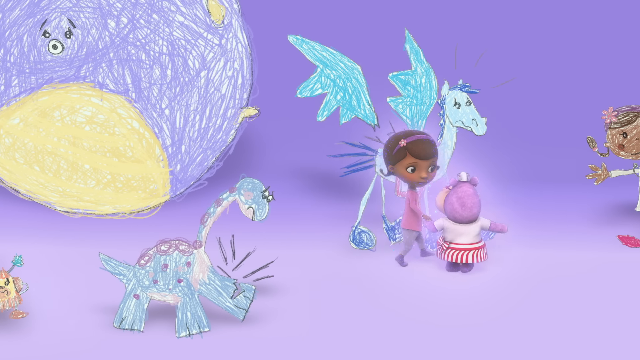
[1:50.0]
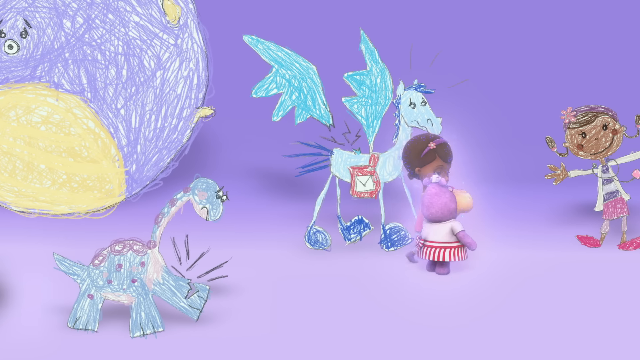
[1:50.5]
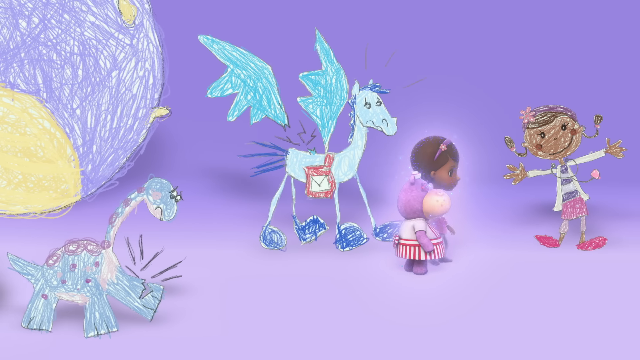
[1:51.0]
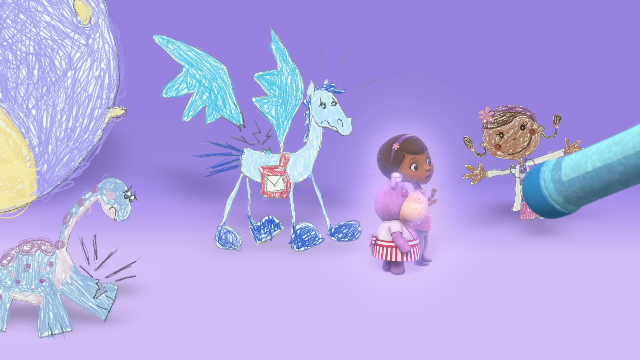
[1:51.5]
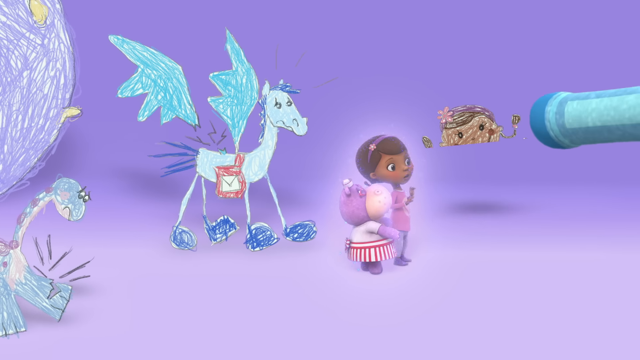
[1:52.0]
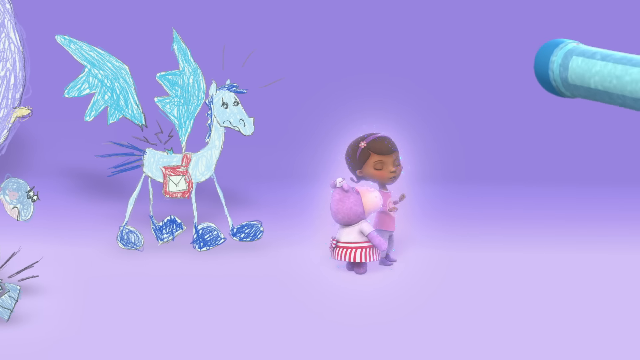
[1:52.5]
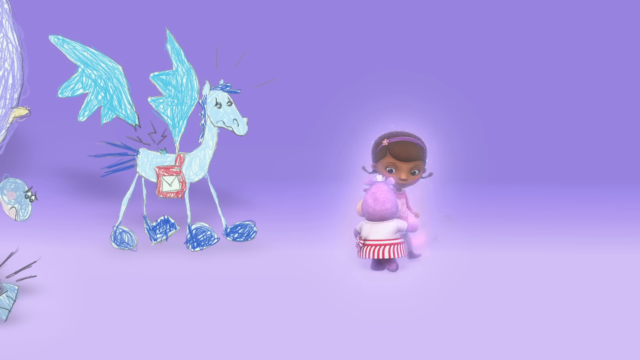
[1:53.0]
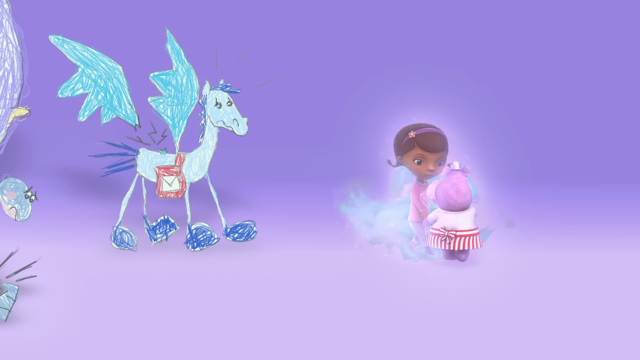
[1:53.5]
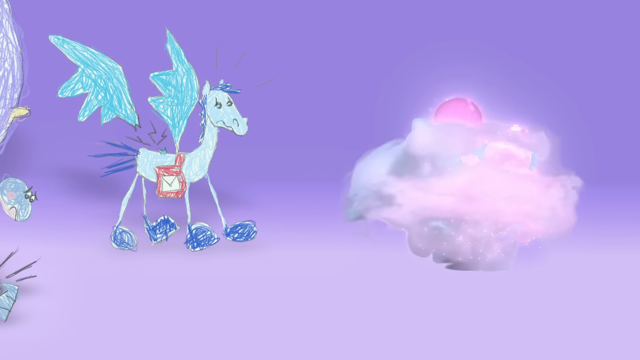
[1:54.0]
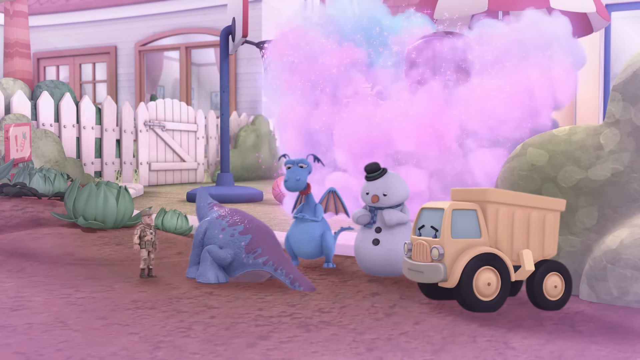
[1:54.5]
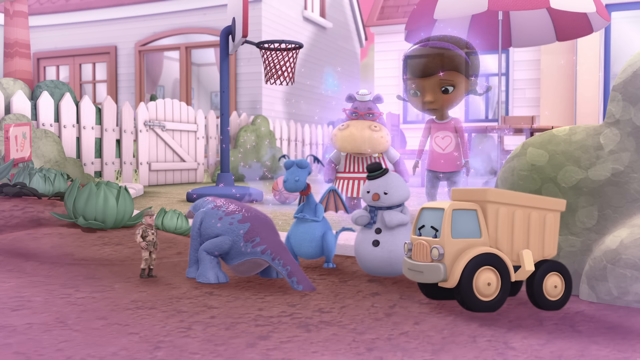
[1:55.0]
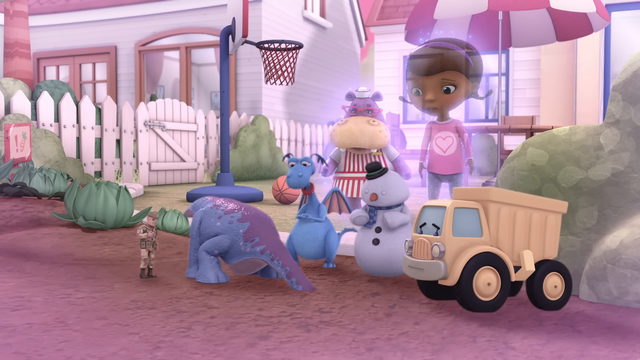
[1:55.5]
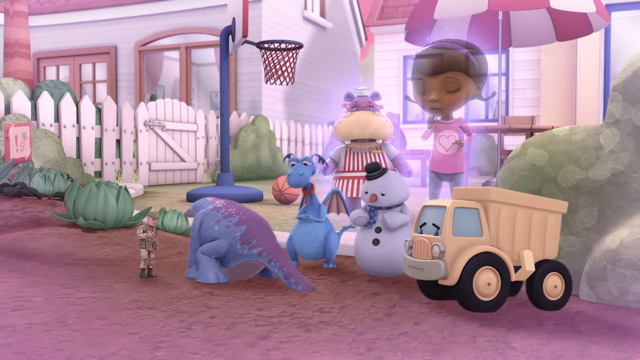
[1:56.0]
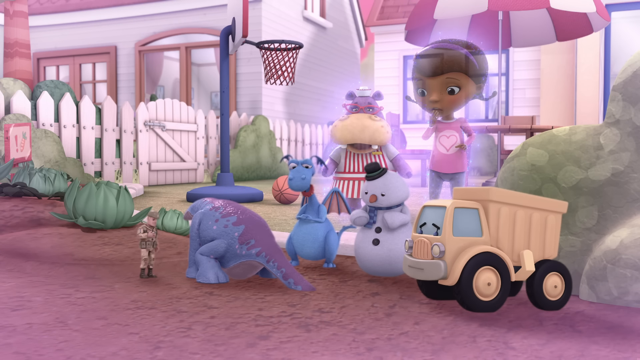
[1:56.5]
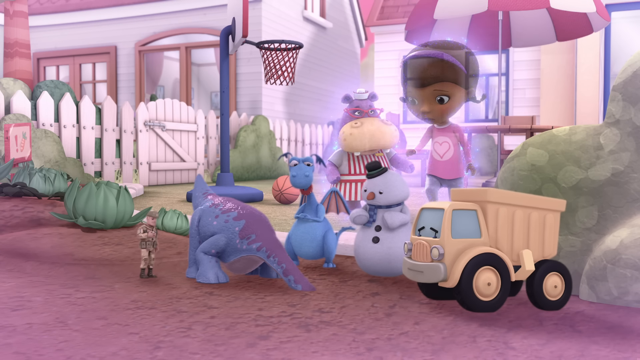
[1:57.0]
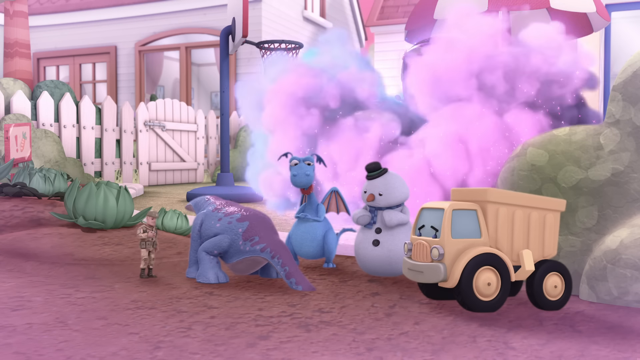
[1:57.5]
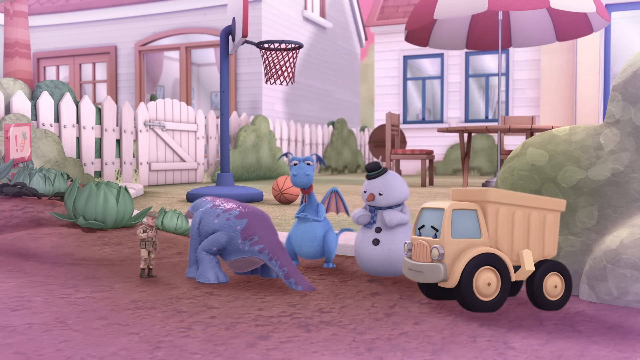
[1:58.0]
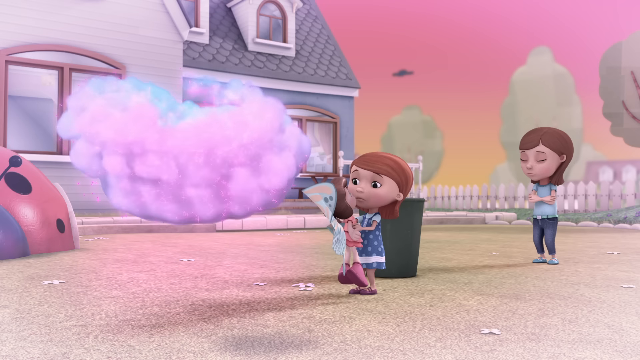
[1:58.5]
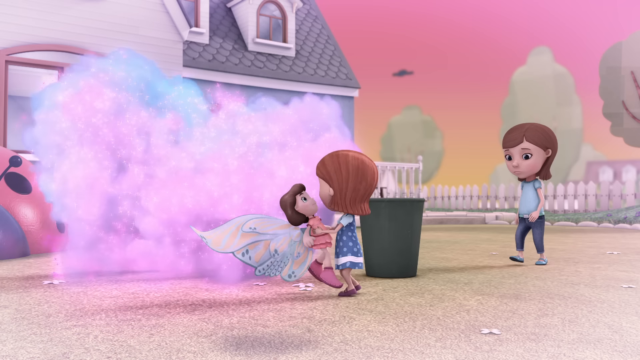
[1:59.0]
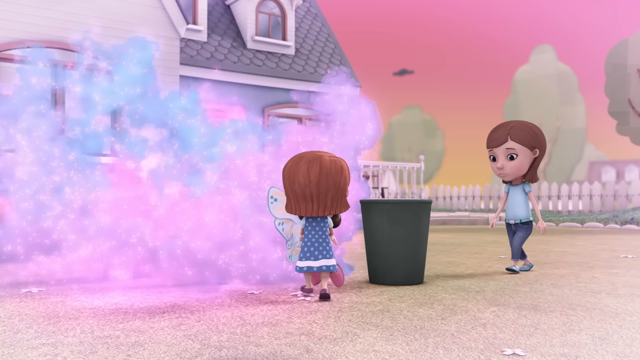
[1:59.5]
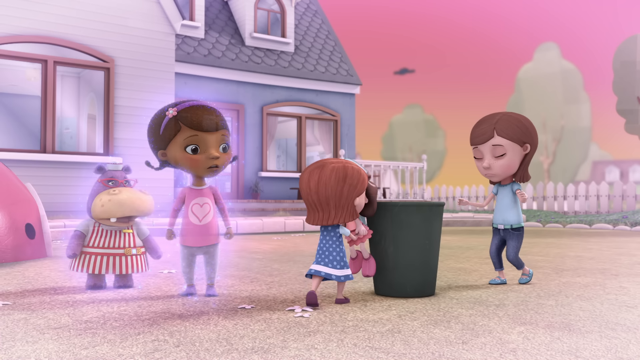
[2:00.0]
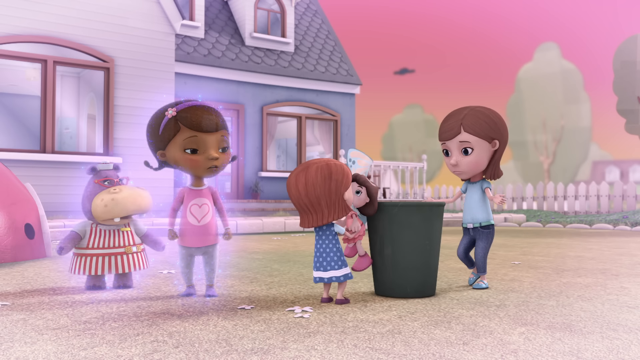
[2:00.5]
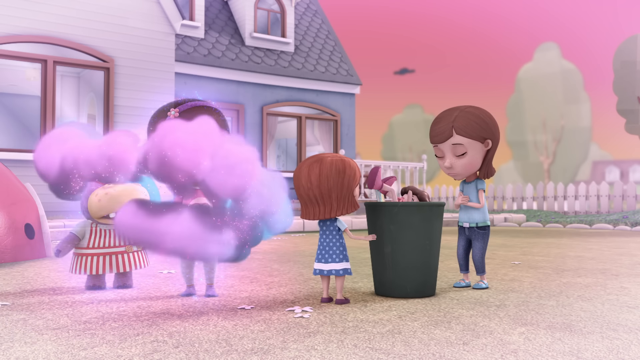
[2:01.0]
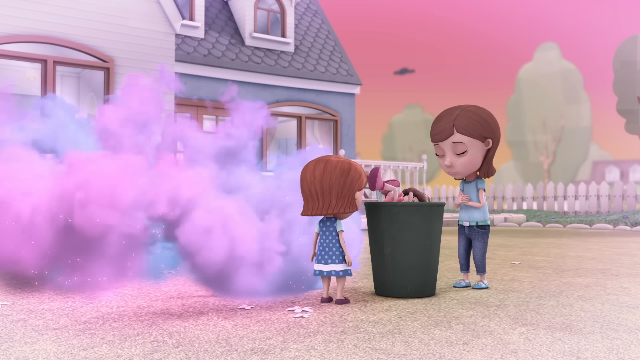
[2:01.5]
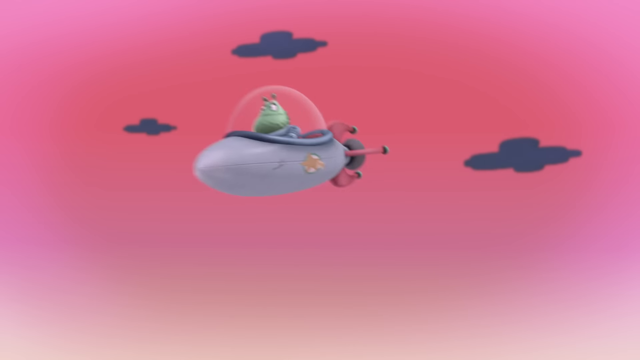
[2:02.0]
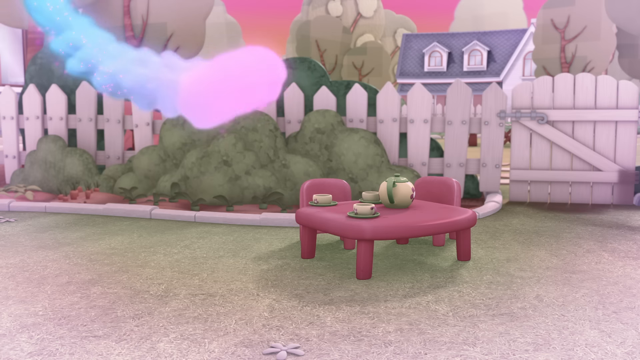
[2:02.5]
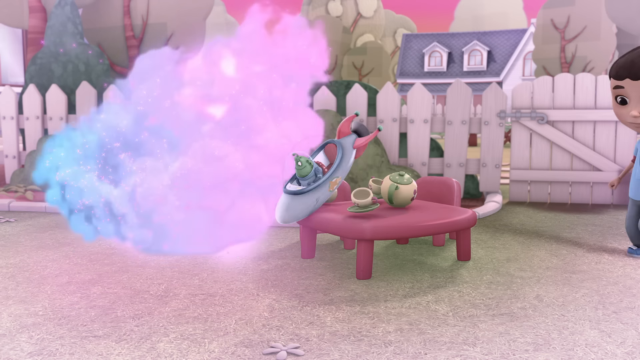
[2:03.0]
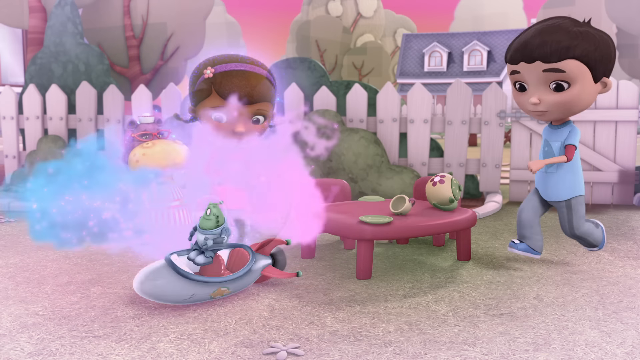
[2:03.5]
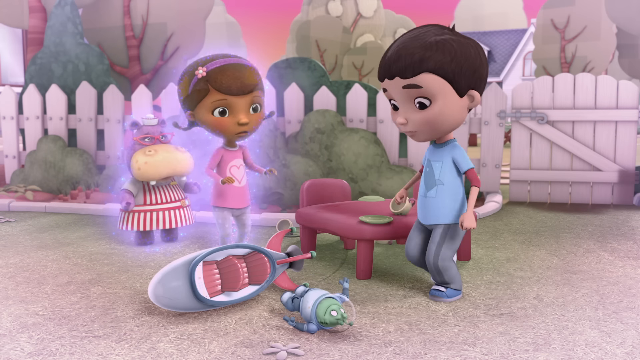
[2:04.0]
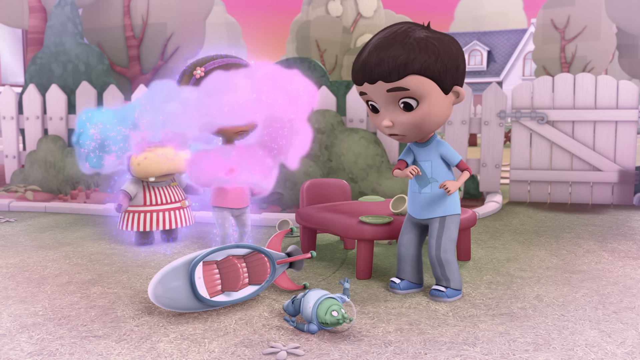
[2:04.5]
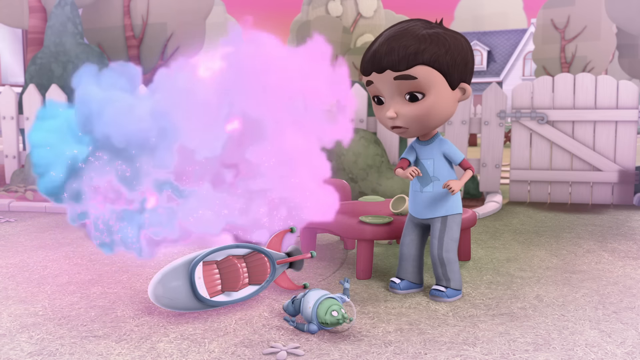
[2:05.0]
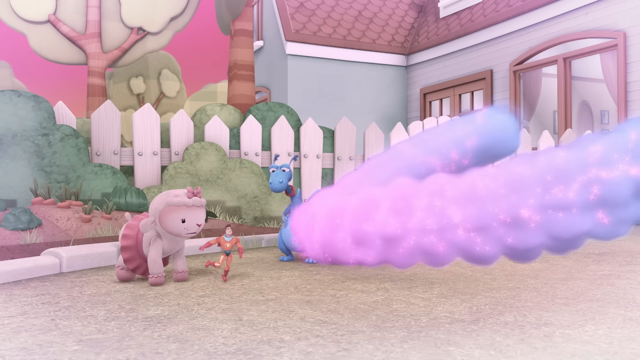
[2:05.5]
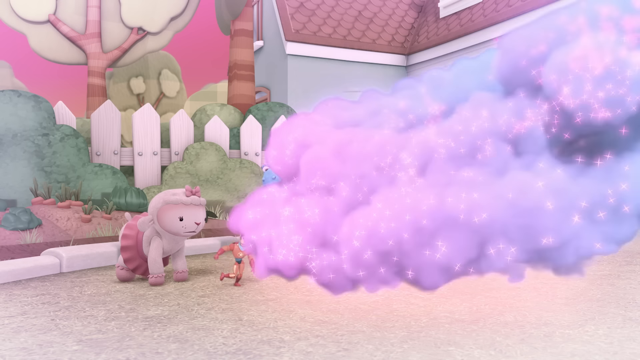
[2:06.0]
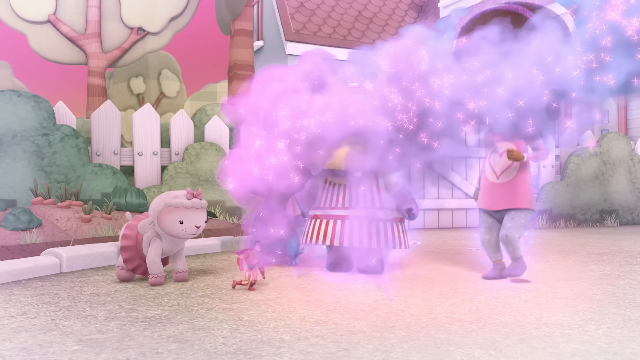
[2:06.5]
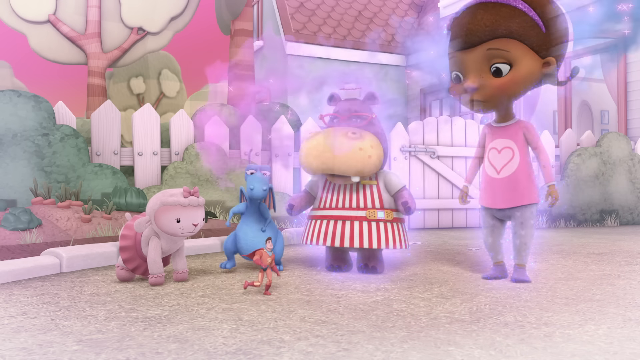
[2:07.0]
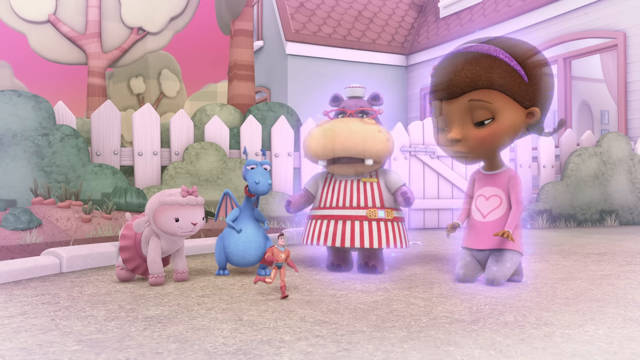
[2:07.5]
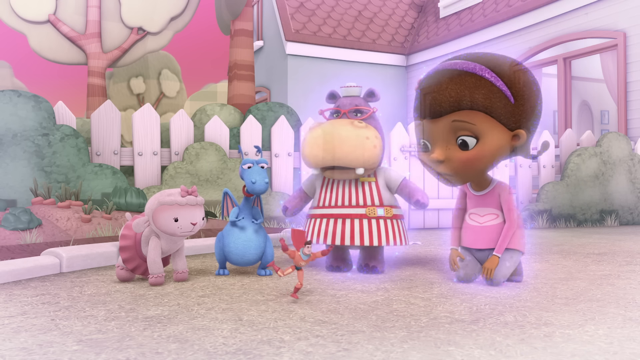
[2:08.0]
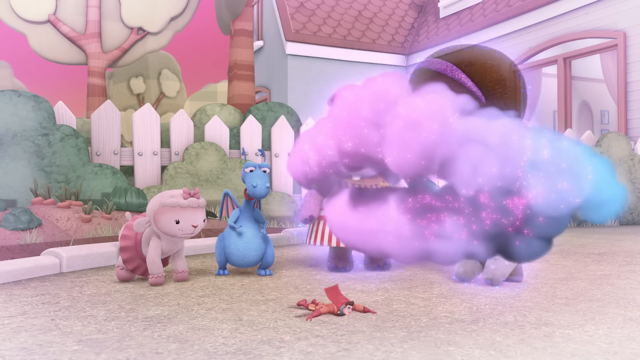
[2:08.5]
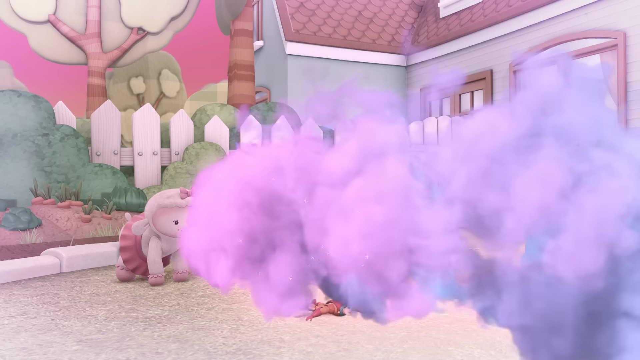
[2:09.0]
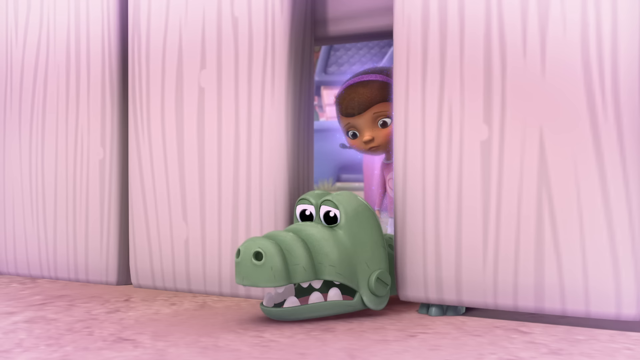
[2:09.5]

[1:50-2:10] In what appears to be a dream sequence, the little dark-skinned girl with brown hair and a purple-blue hair ribbon walks with the hippo in its red and white outfit and red glasses. There is a crayon drawing of what could be a planet, with a face and eyes, yellow on the bottom and blue on top. There appears to be a greenish and yellow dinosaur in the lower left-hand corner of the screen, looking sad in the eyes. A dragon is in front, roughly in the middle of the screen and slightly to the right, with greenish-blue wings, a white body, a little bit of blue on the head and blue hooves. The background is still a purplish-white color. They walk by a spot where a blue eraser pops onto the screen and erases what could have been a little girl. A cloud of smoke then transports the little girl and the hippo outside a house with brown trim, a white picket fence and a toy truck. The dragons now look more alive, and there are people and the snowman. A basketball pops into view, and a red and white table umbrella pops up. There is a little bit of green on the right side, and the ground is brownish. The little girl is transported somewhere else; a boy in a blue shirt pops up, and the dragons and some people follow them. A Hungry Hungry Hippo-looking thing pops up.